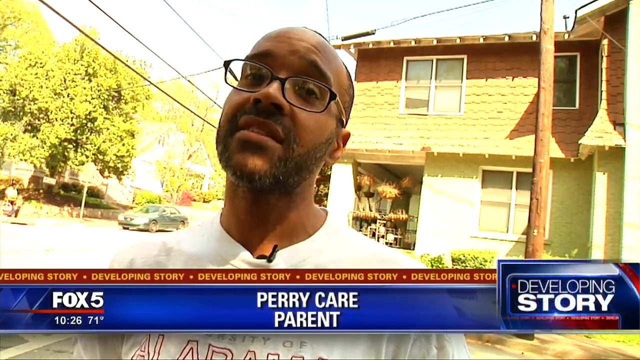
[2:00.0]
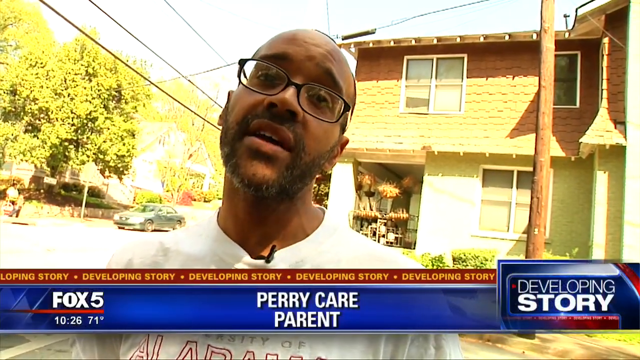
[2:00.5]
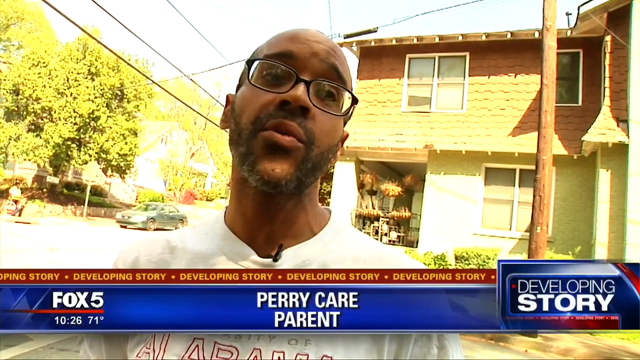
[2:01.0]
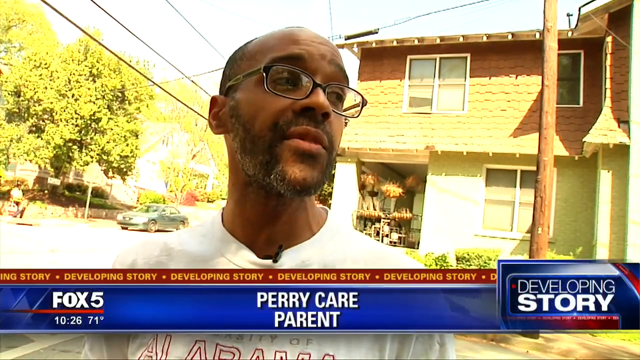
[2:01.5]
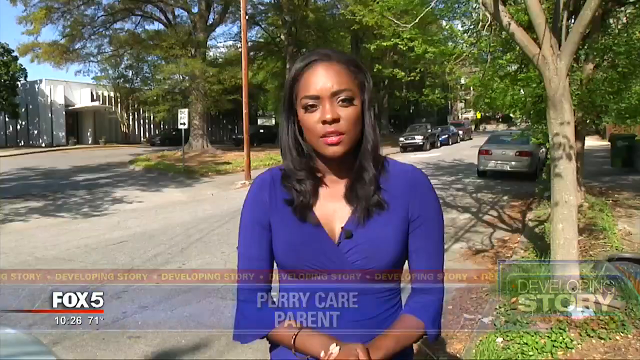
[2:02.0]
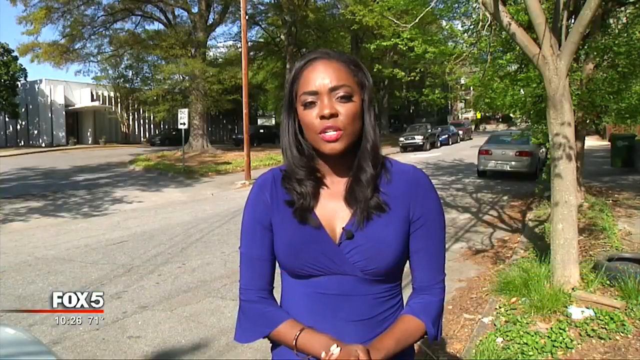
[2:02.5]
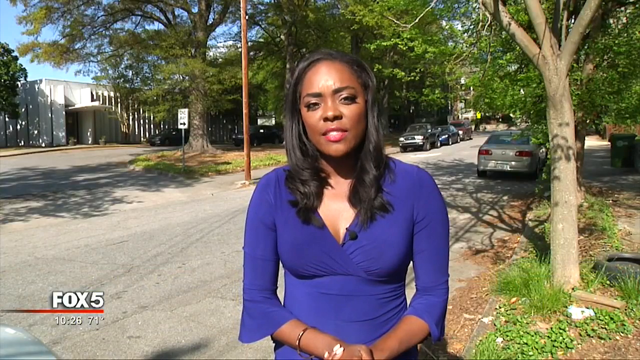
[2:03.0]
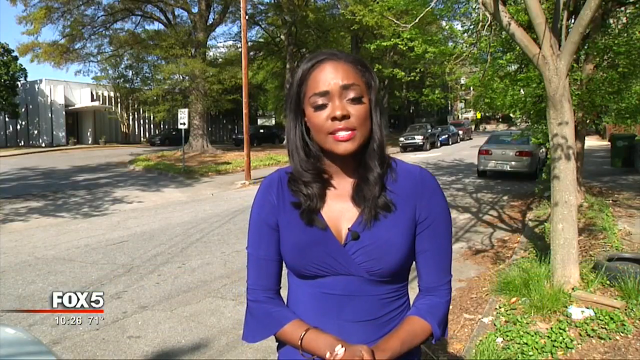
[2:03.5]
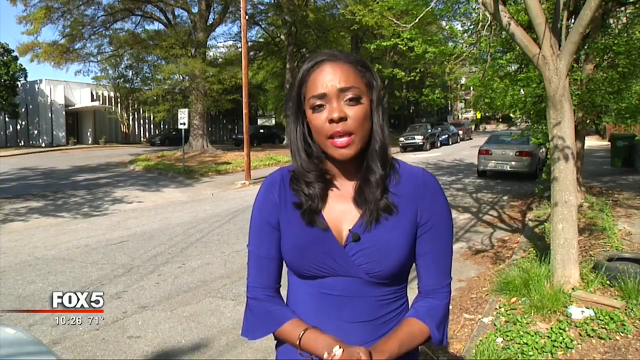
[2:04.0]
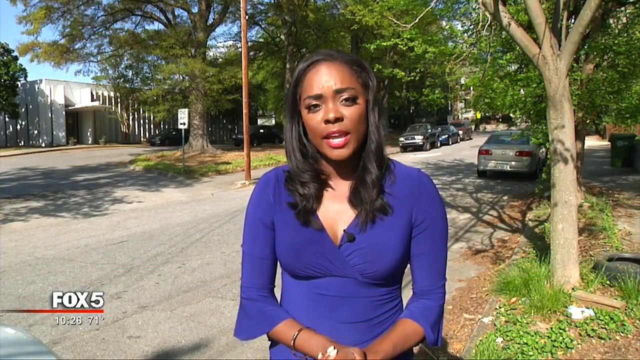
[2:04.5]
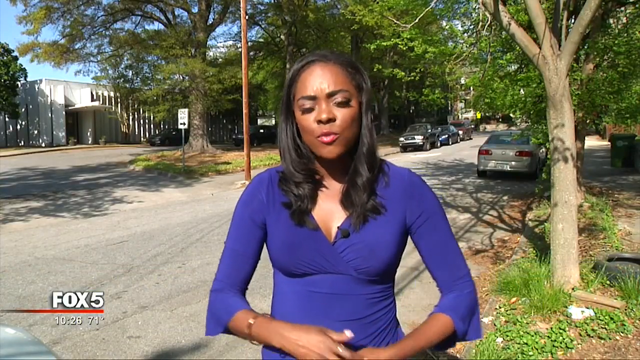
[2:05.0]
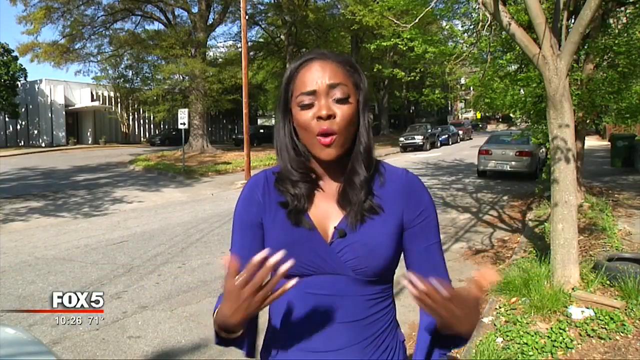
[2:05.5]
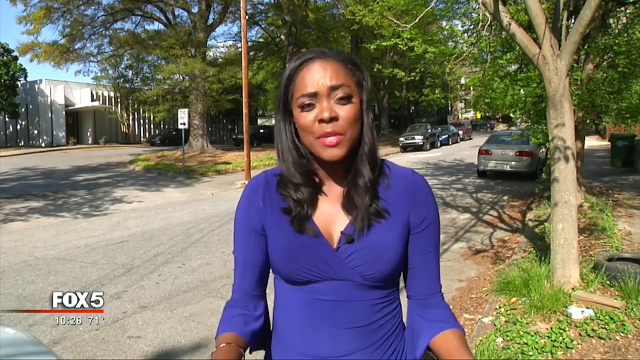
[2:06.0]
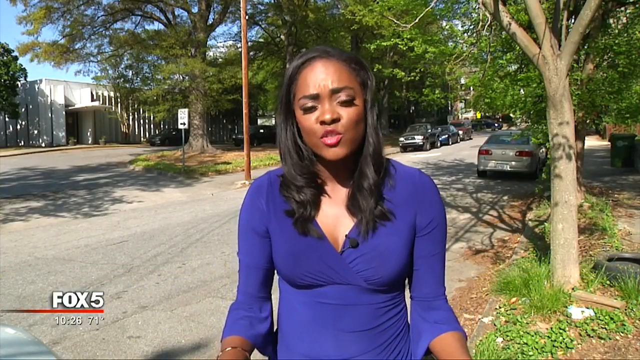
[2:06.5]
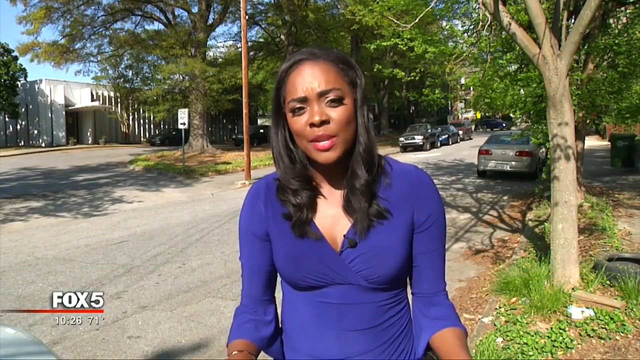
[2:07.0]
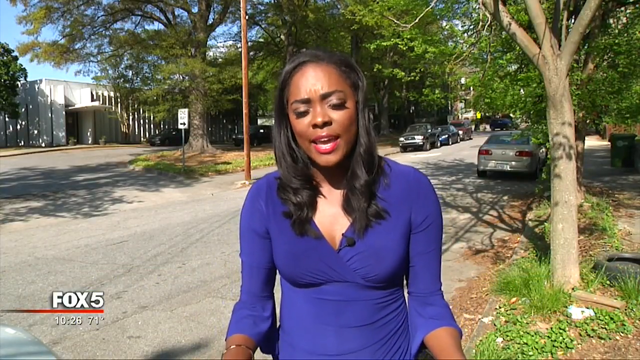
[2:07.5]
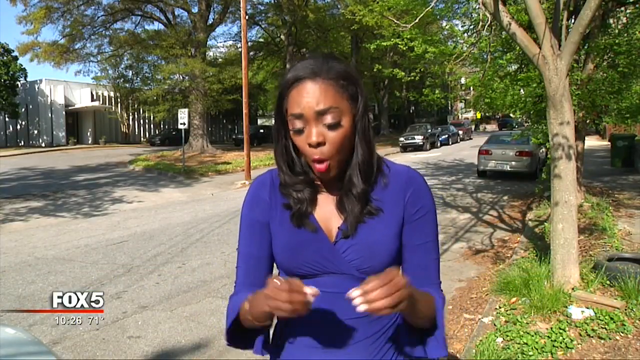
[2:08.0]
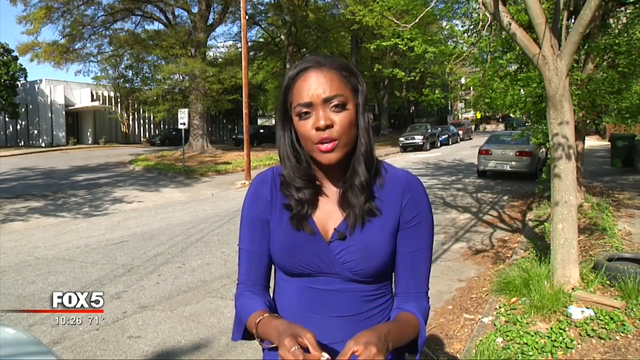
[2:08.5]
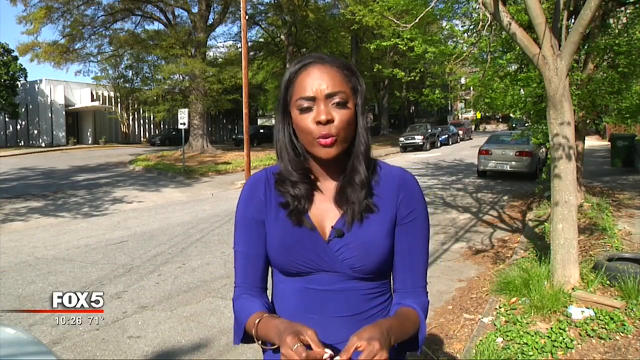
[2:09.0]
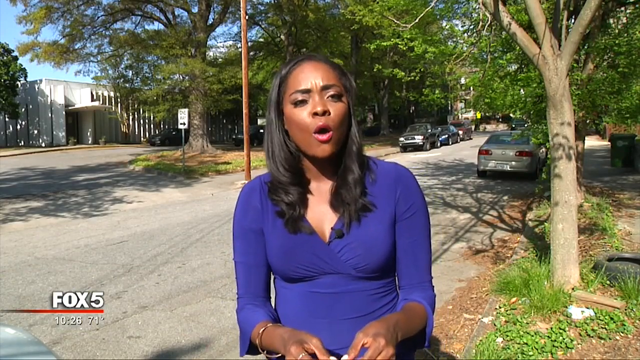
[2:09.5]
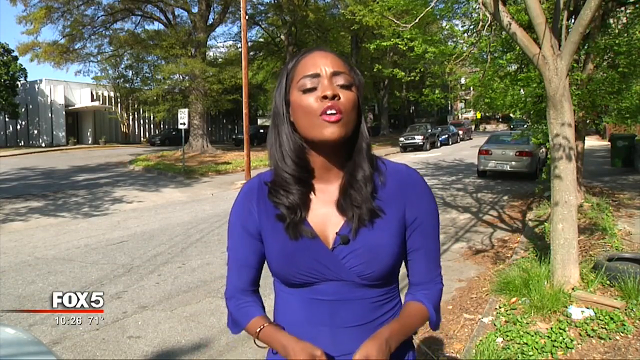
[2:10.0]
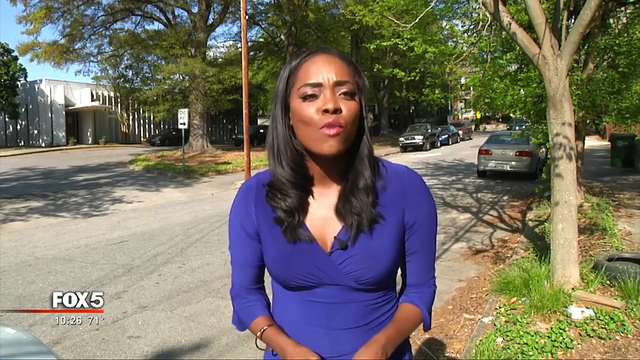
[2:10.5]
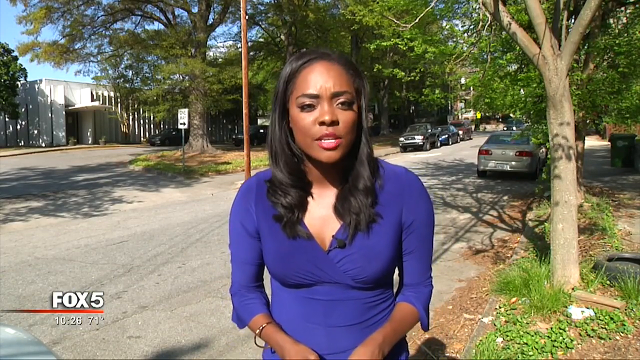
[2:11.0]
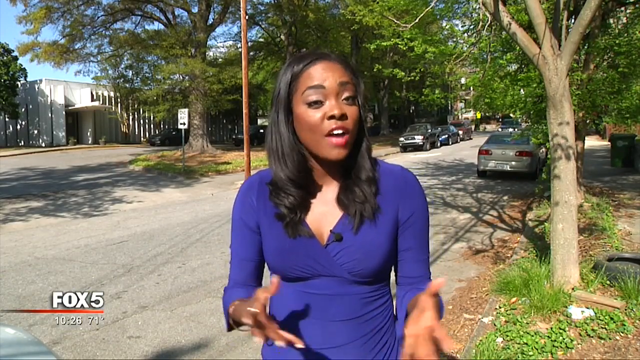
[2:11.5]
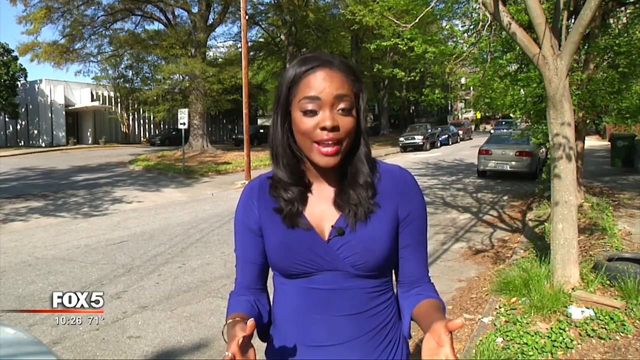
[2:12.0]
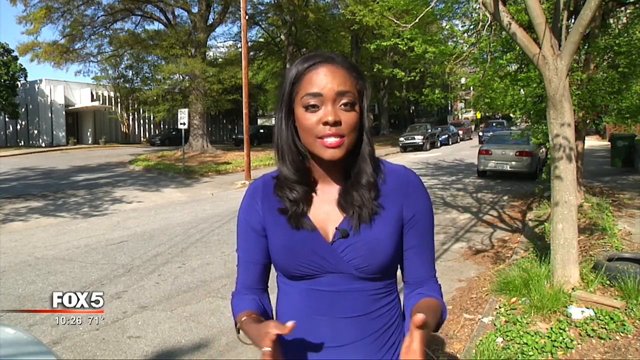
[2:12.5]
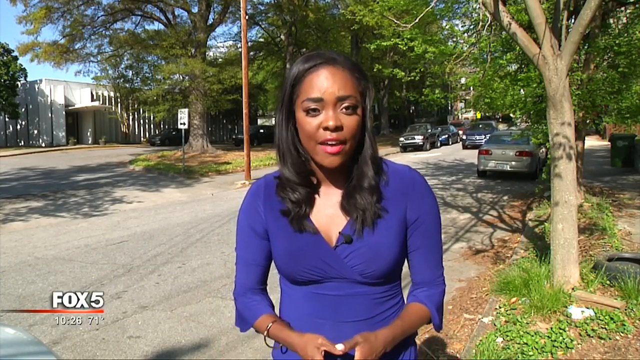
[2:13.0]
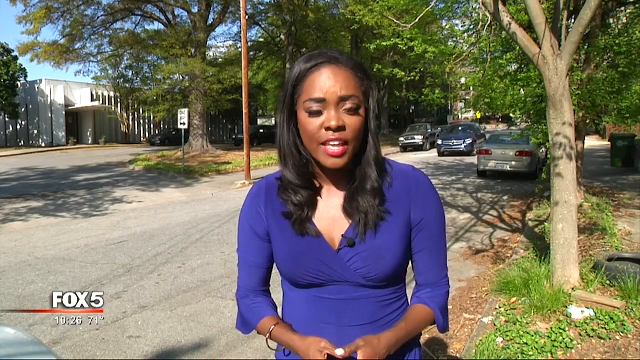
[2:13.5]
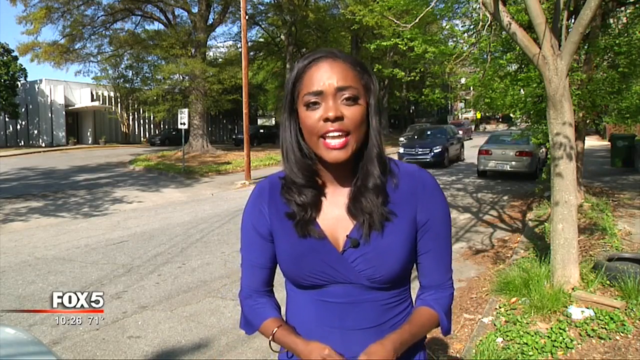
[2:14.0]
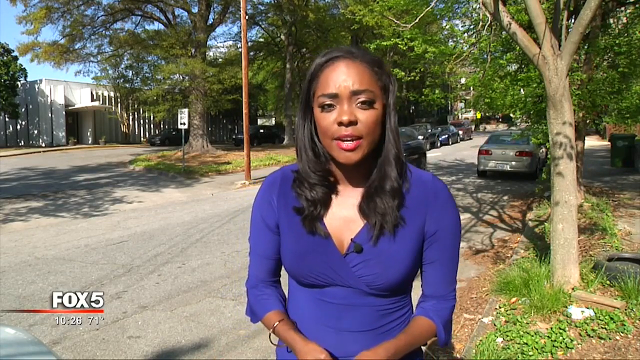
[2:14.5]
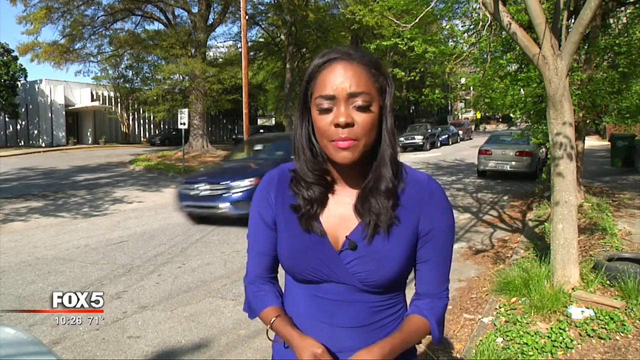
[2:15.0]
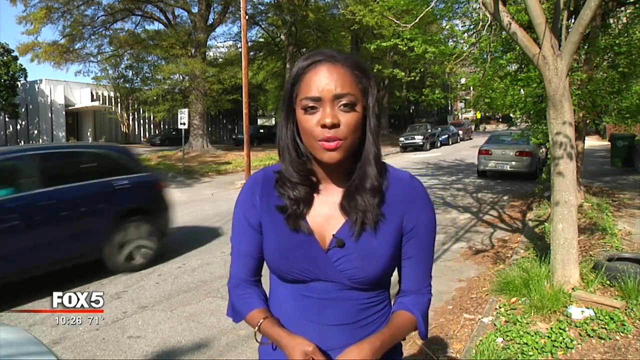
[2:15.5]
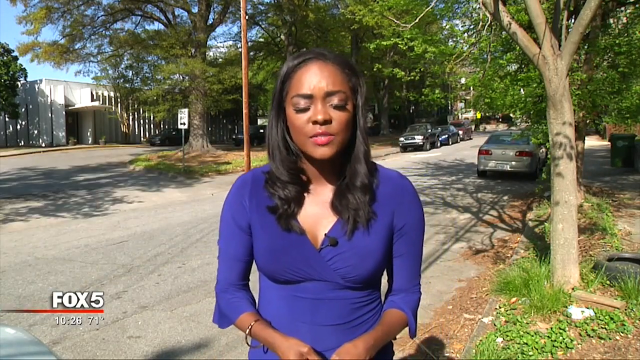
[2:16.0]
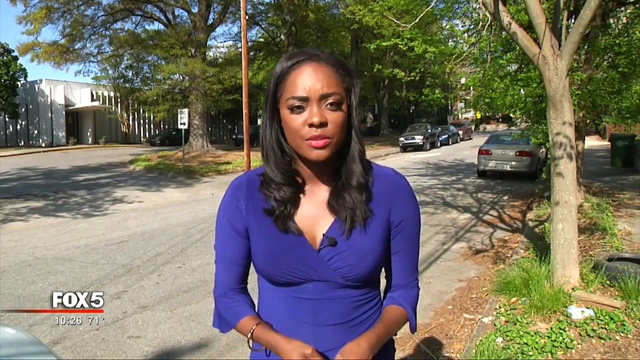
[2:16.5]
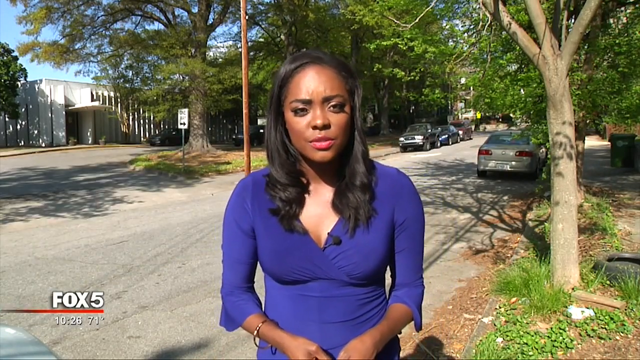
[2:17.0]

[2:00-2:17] The parent, Parry care, is interviewed. Beside him is a double-storey house that does not look luxurious but looks presentable, and on his other side is a road. A green car waits on the road, and across the road a woman carrying her luggage is waiting; she looks Black. The scene looks very sunny, with light reflecting in a yellow colour. The man wears spectacles and a white T-shirt with a small black microphone on it. He responds about how he feels. The scene then cuts back to the news reporter, a Black woman in a blue dress, who appears to be talking aggressively judging by the movement of her mouth.